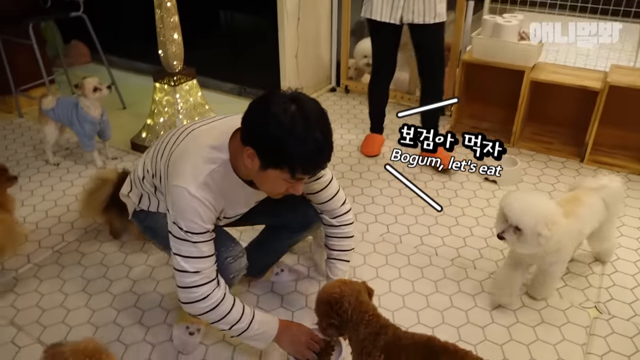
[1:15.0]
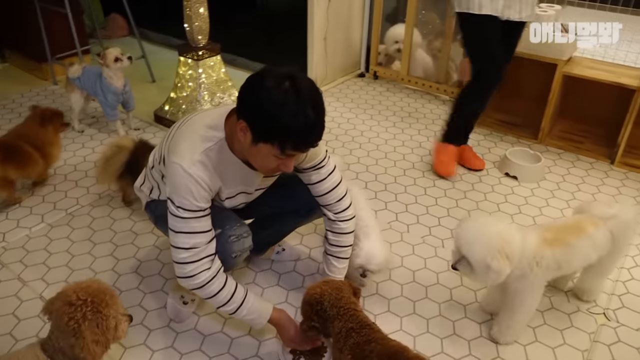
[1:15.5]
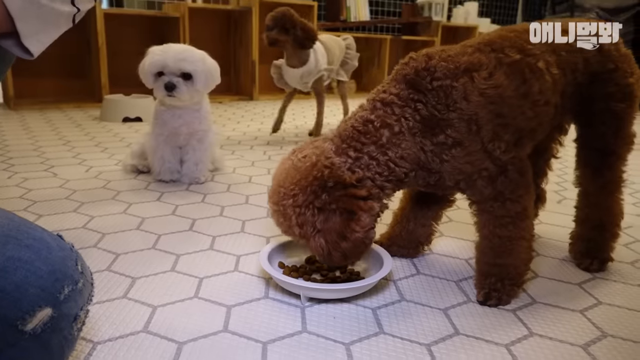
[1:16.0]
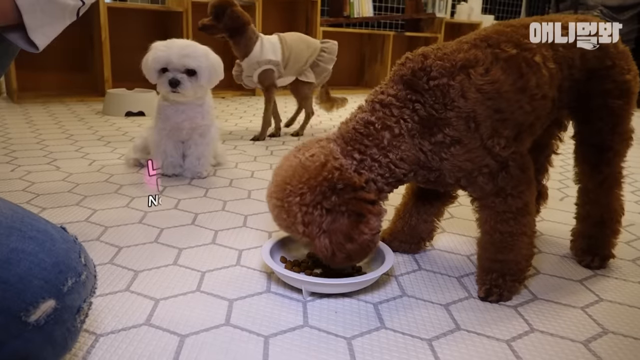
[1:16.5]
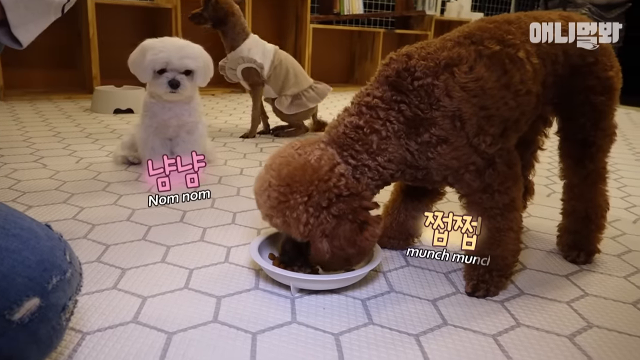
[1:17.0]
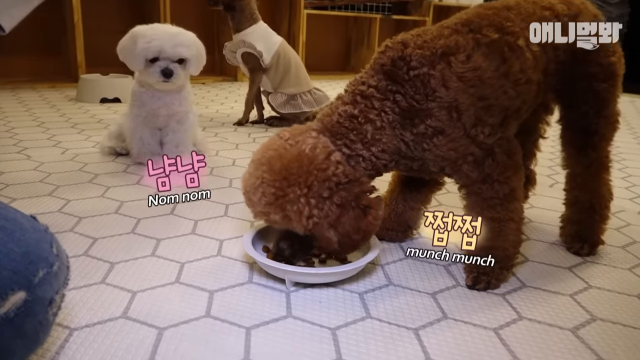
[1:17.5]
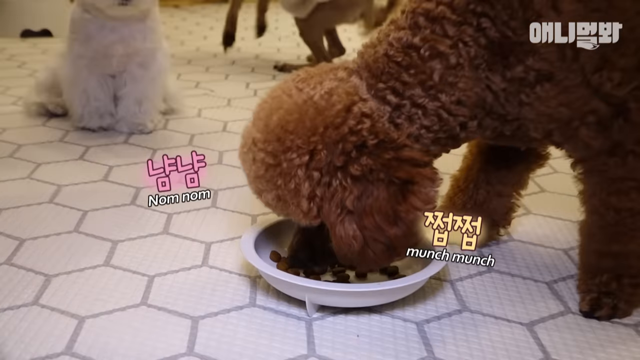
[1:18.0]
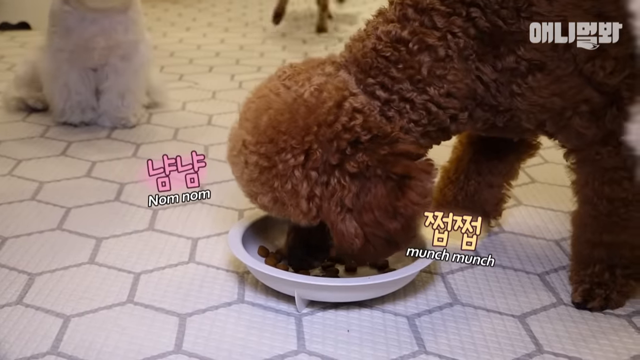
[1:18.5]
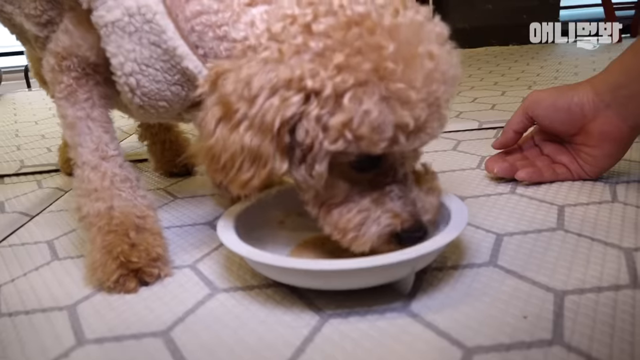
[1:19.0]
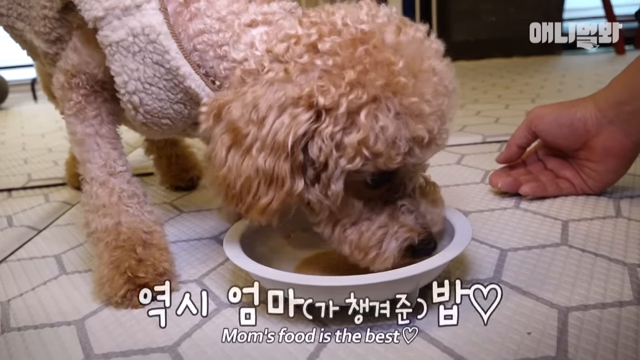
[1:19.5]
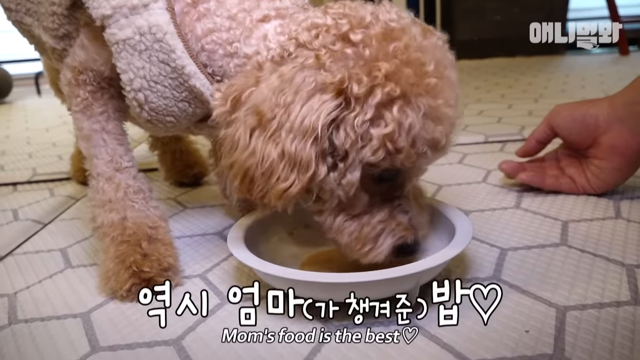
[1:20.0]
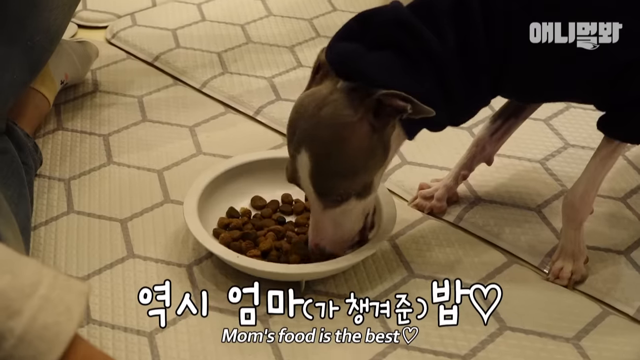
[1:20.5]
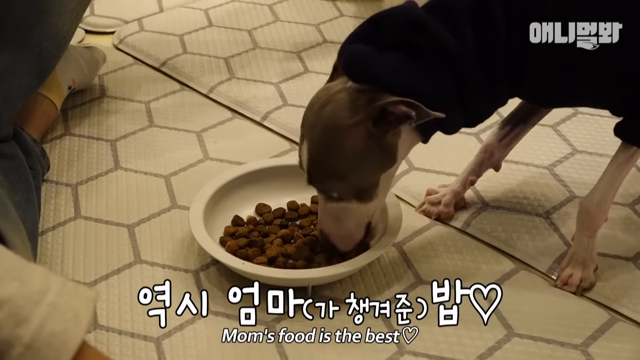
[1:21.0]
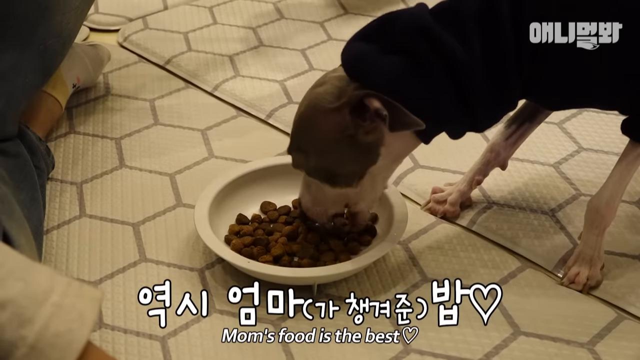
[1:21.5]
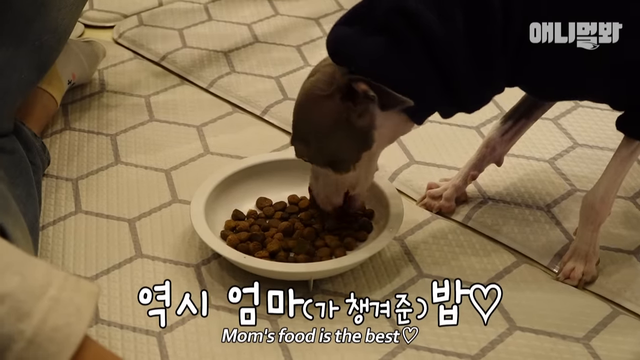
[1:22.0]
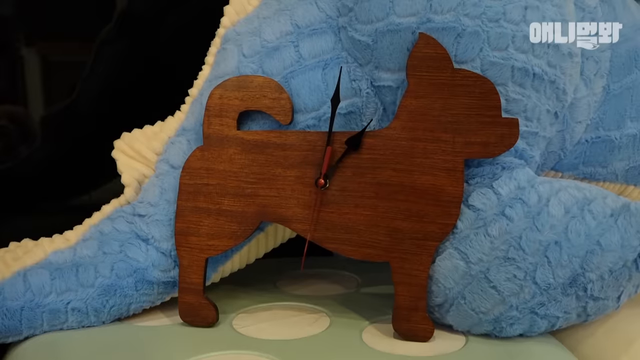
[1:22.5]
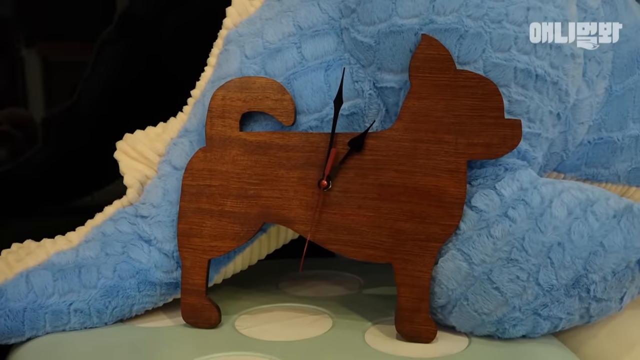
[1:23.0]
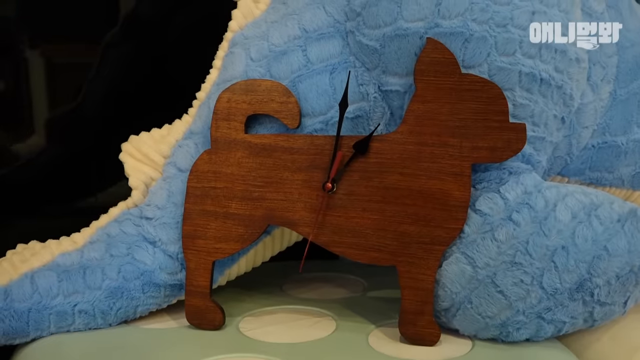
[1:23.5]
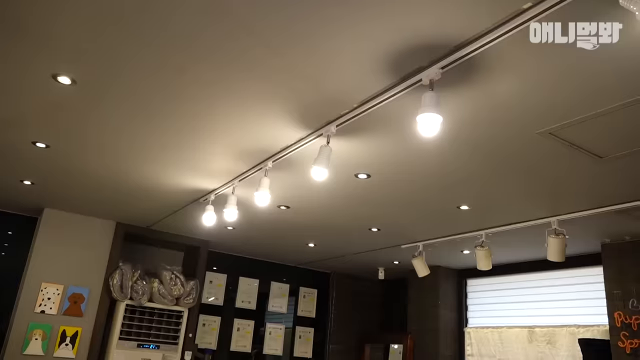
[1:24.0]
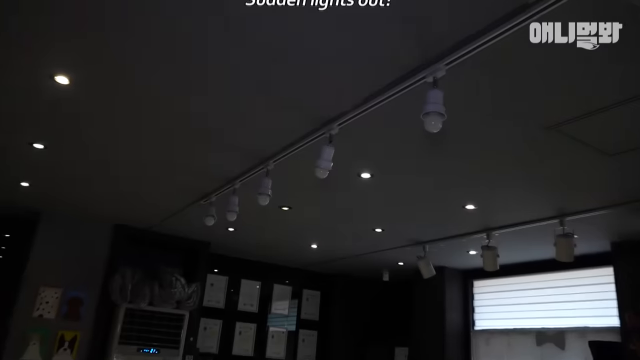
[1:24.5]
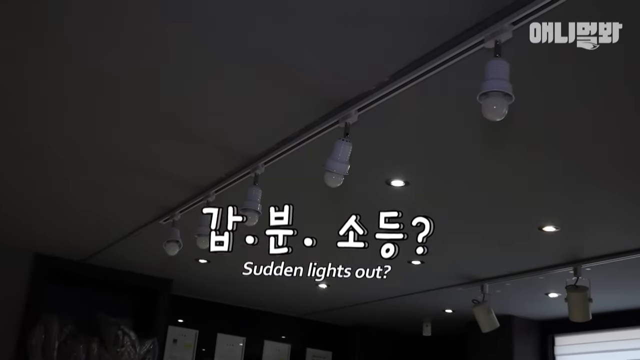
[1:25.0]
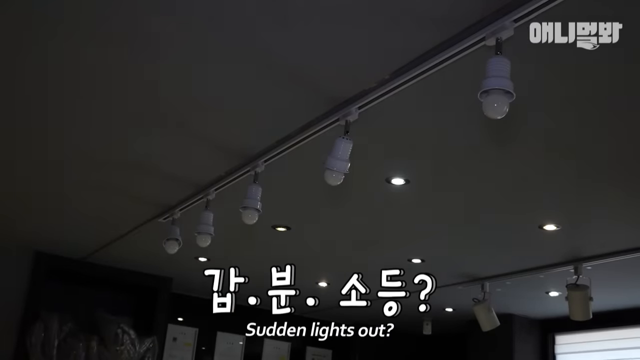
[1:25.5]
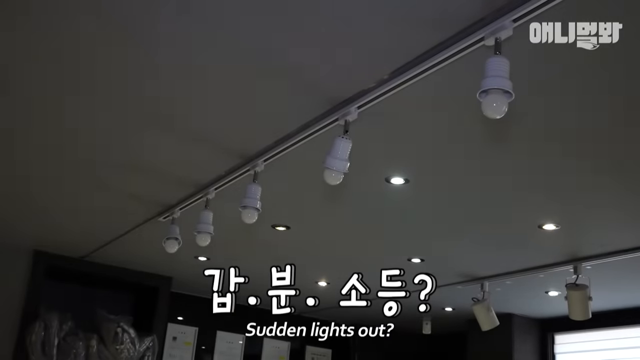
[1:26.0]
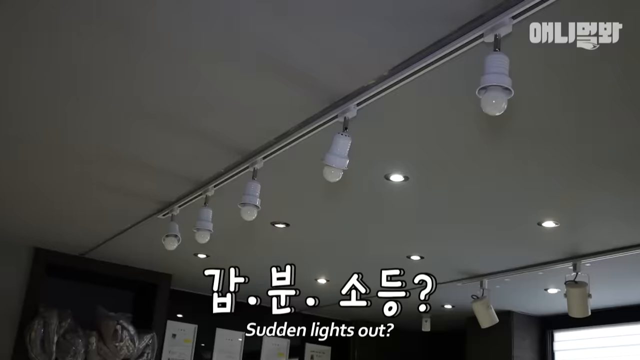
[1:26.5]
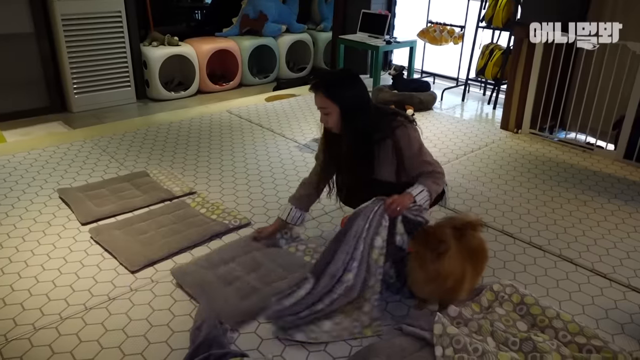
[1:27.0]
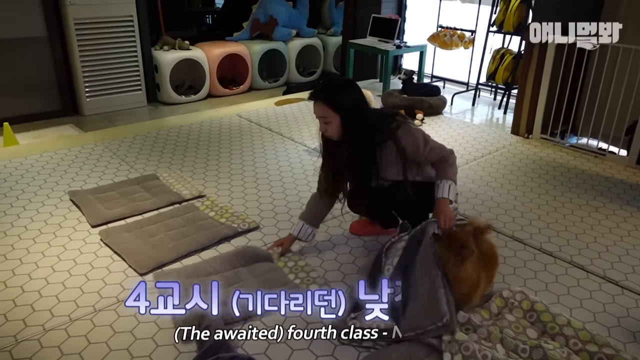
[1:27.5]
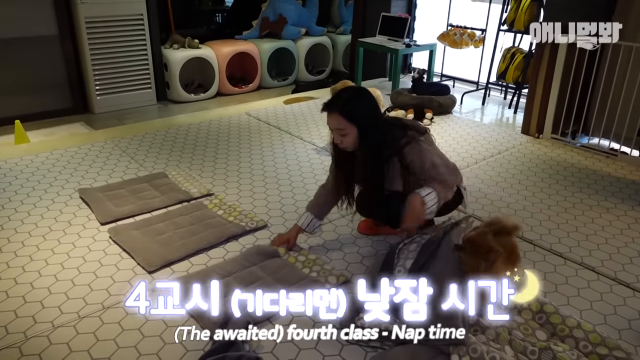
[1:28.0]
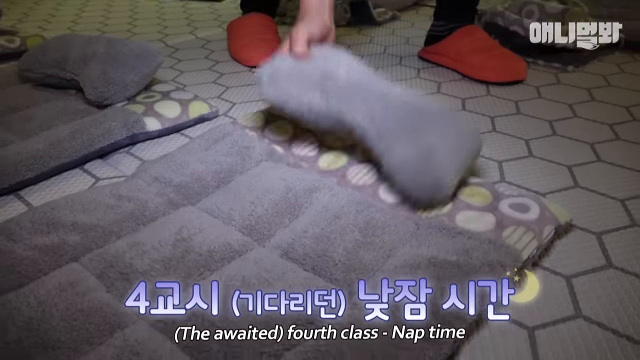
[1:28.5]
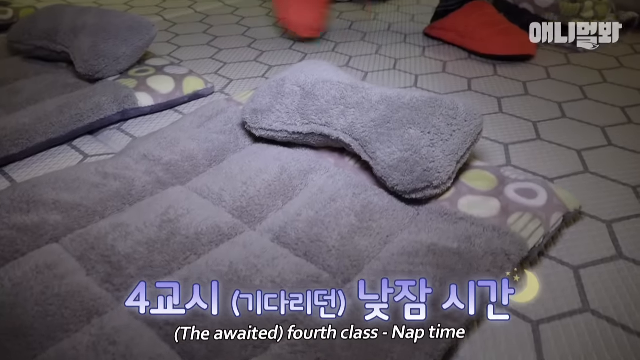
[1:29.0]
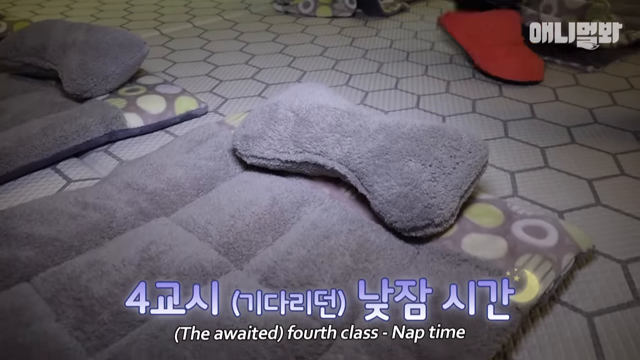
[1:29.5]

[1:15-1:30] The man feeds the dogs, saying "let's eat" in the caption. He puts little white bowls with brown kibble inside down in front of the dogs, and they all start eating. There are lots of brown fluffy dogs and white fluffy dogs, all very fluffy, plus a skinny one in a black sweater. Then a dog-shaped wooden clock appears, with two ticking hands in the center. Brown square shelves are in the background, the floor has a white honeycomb pattern, and the dog clock sits against a blue dinosaur toy.